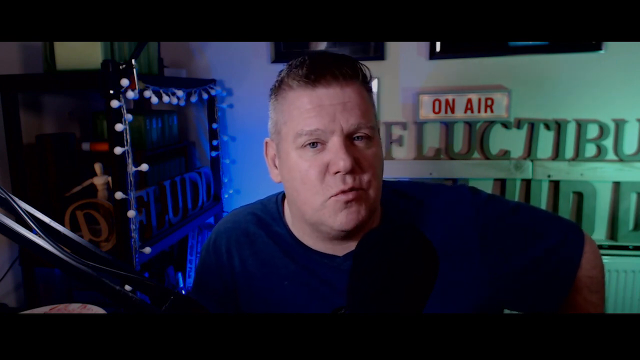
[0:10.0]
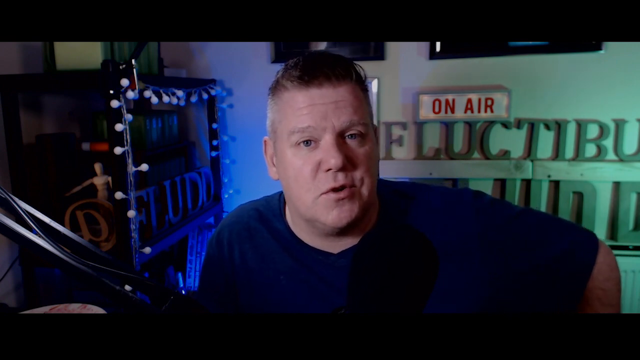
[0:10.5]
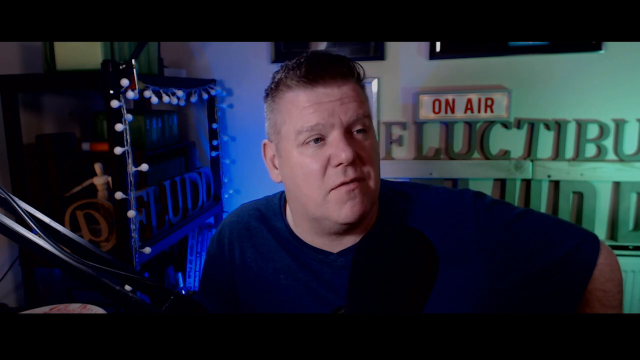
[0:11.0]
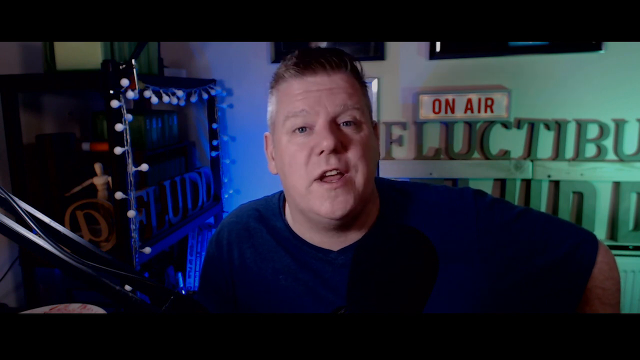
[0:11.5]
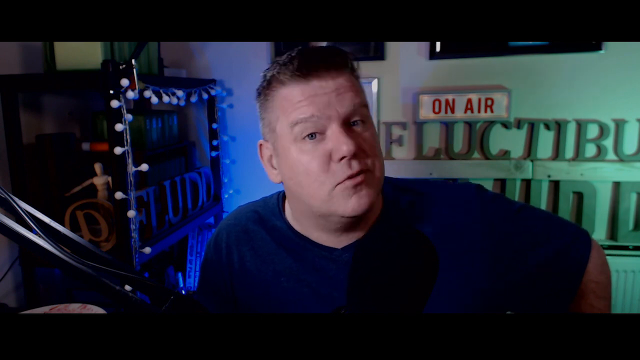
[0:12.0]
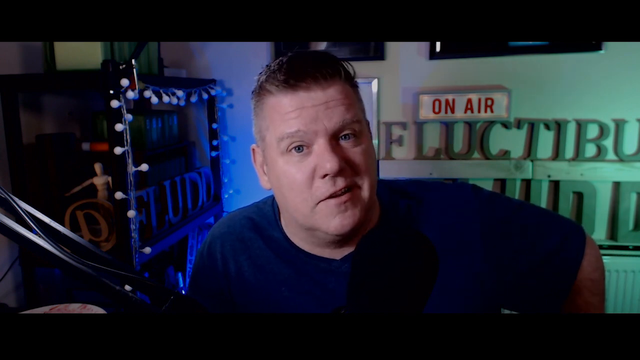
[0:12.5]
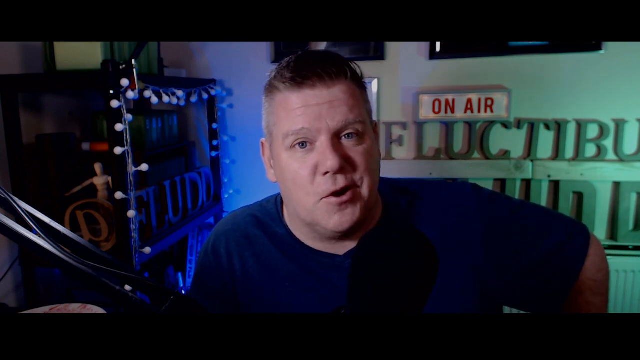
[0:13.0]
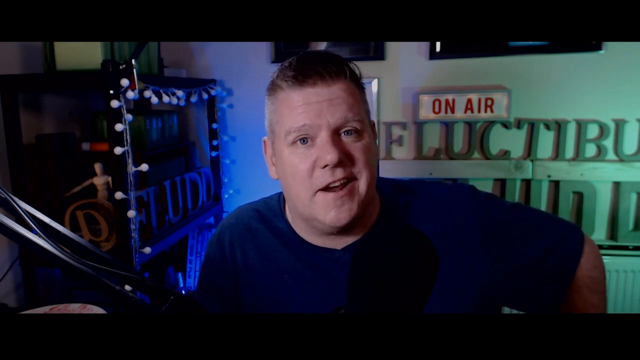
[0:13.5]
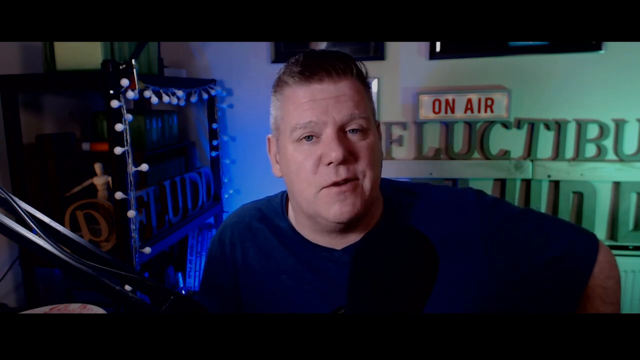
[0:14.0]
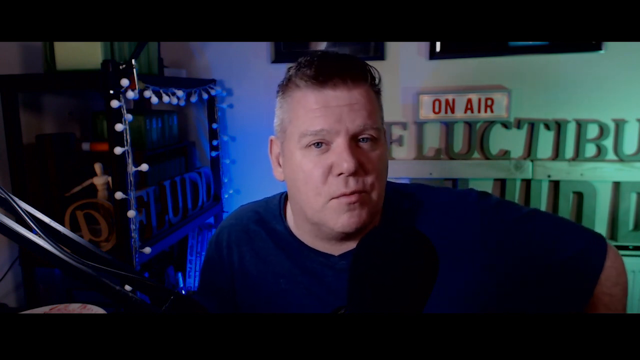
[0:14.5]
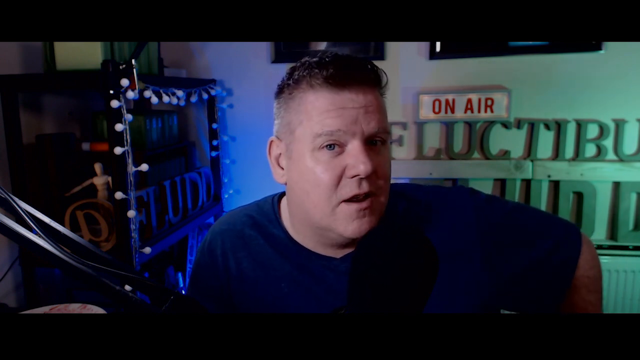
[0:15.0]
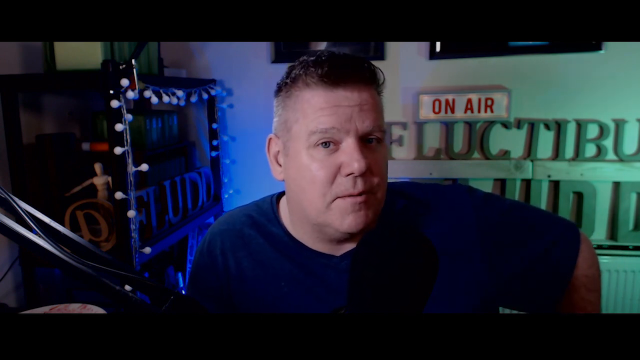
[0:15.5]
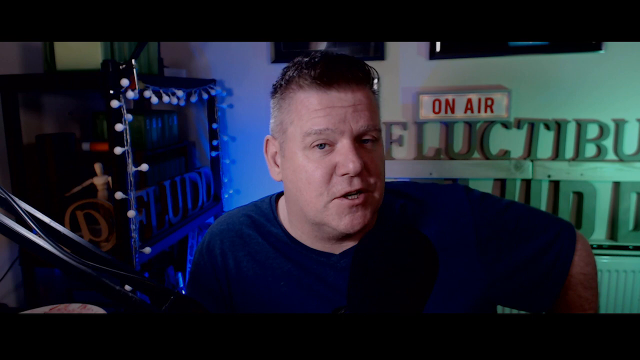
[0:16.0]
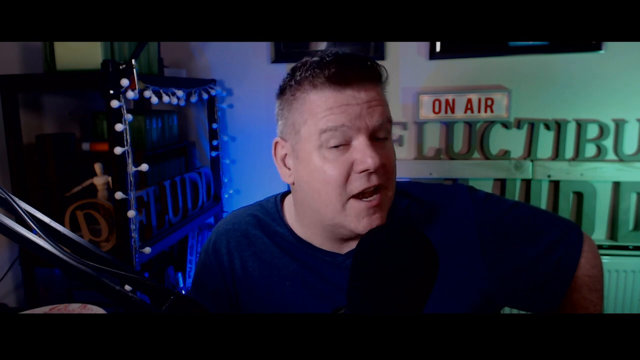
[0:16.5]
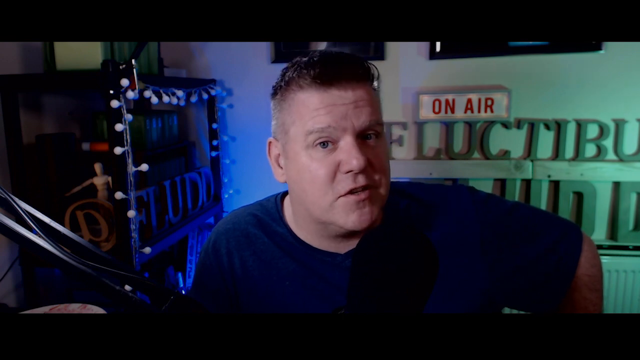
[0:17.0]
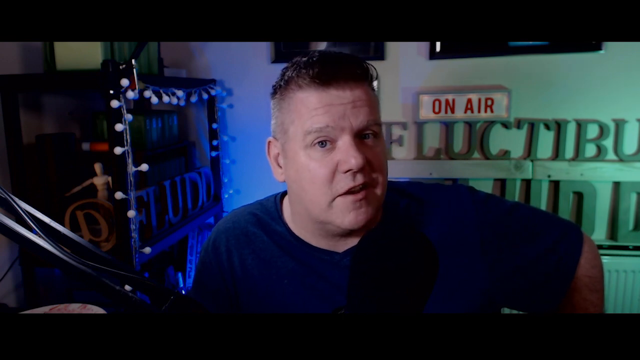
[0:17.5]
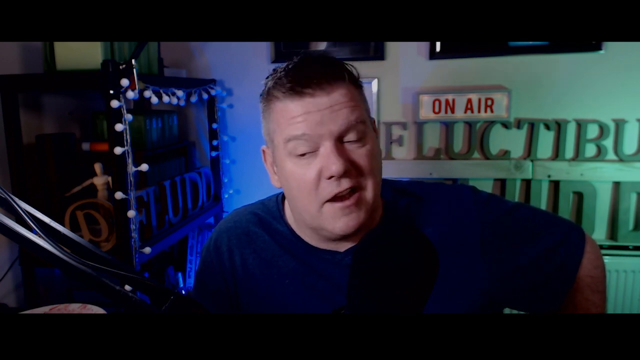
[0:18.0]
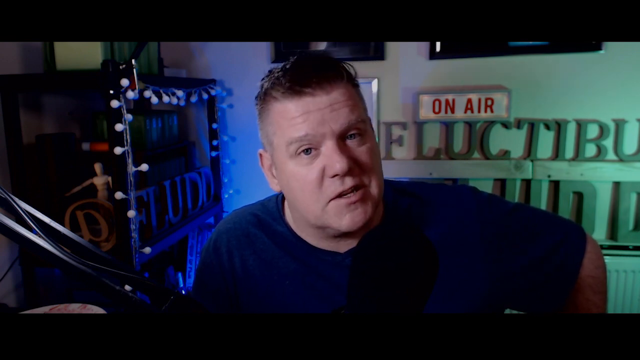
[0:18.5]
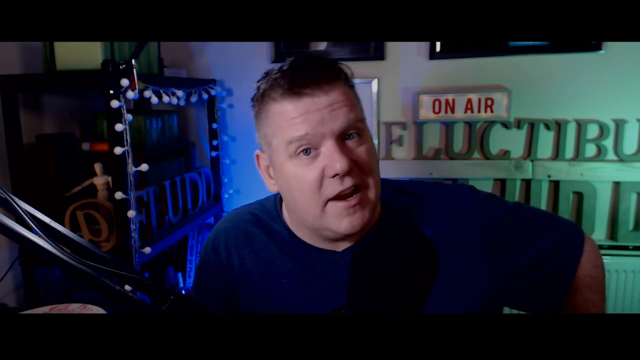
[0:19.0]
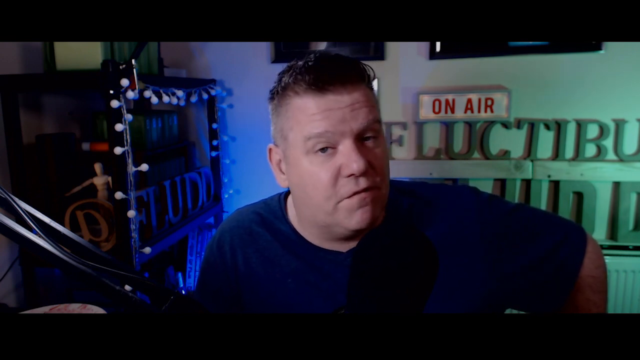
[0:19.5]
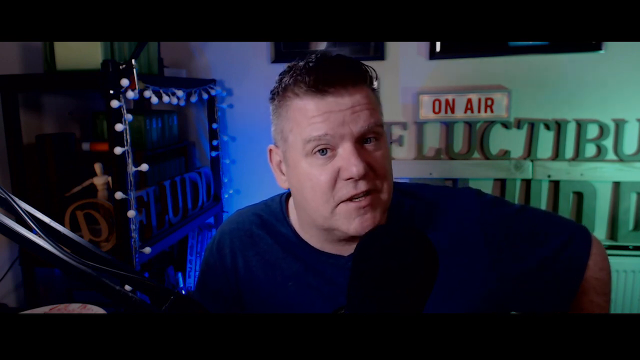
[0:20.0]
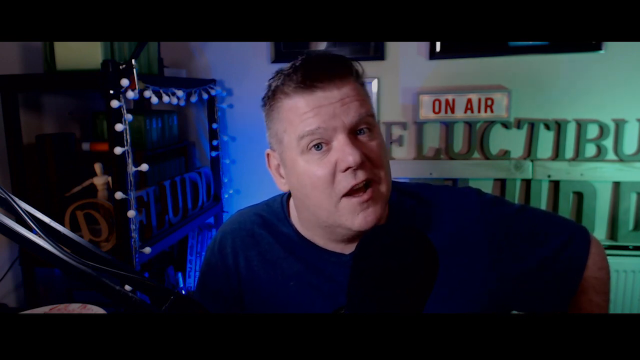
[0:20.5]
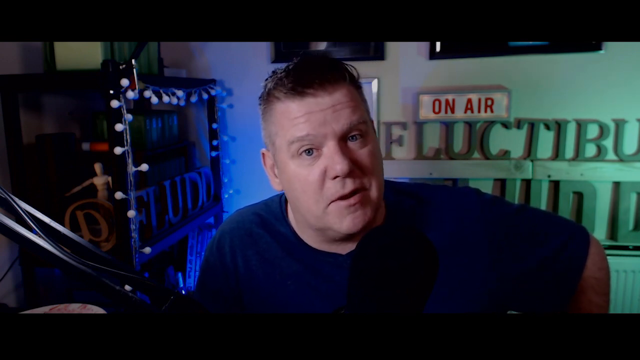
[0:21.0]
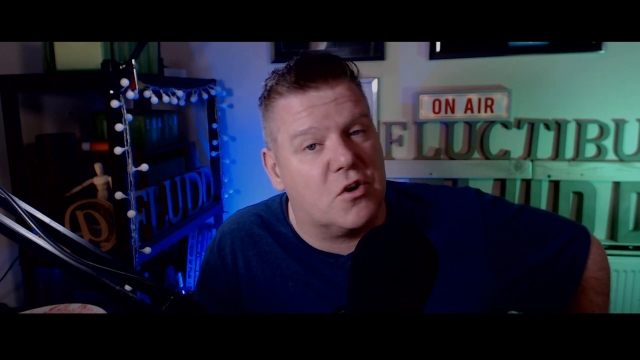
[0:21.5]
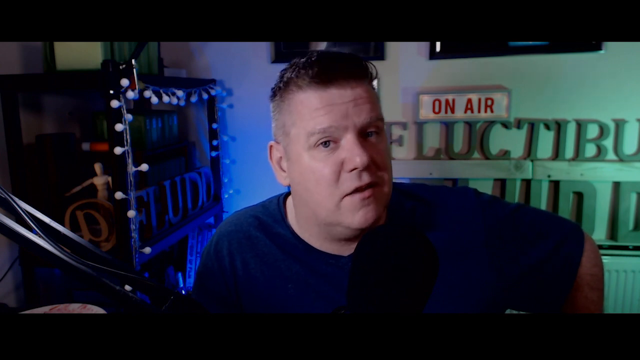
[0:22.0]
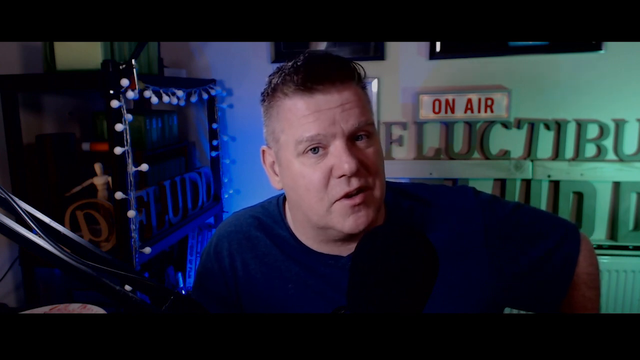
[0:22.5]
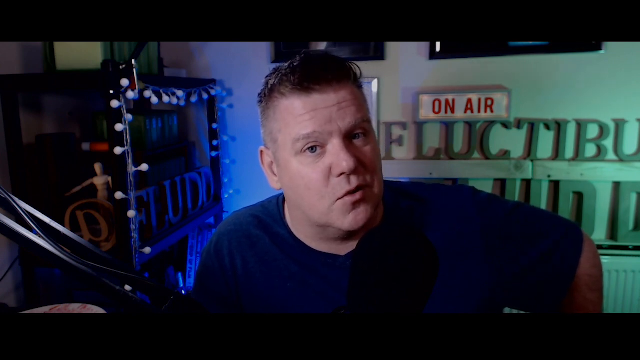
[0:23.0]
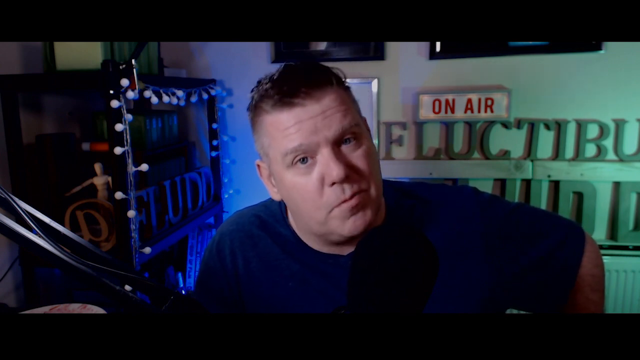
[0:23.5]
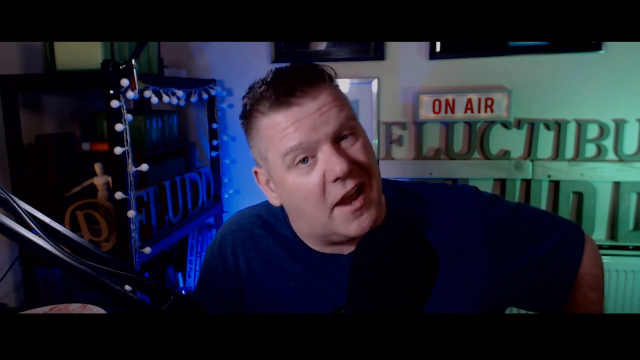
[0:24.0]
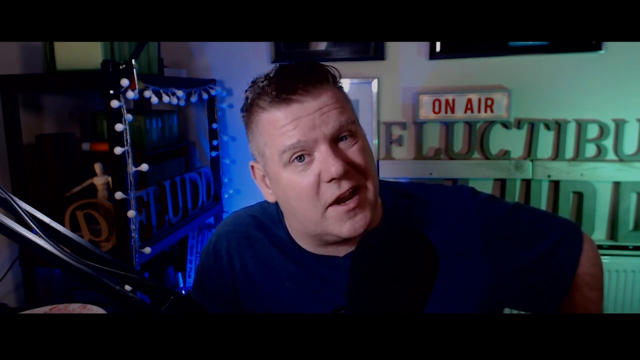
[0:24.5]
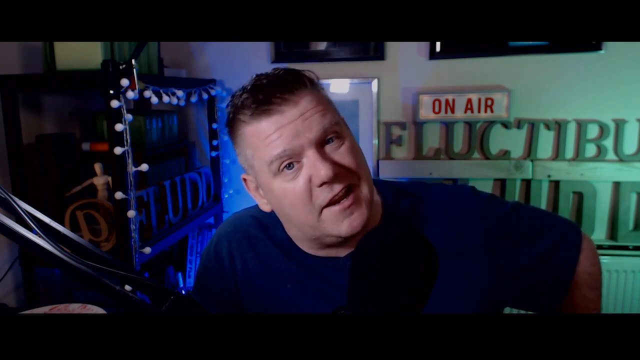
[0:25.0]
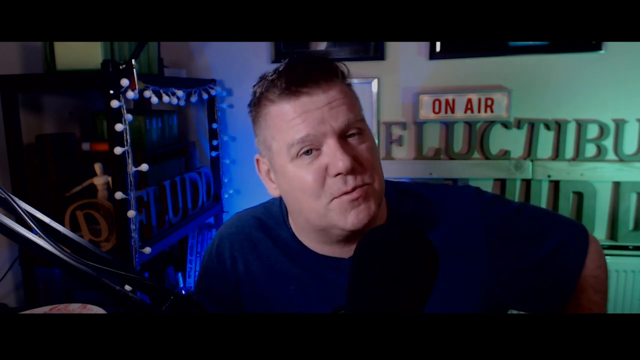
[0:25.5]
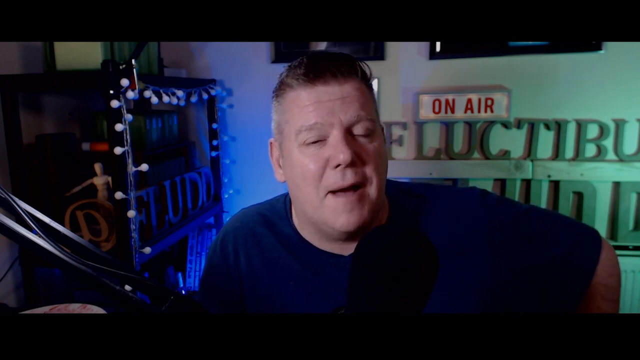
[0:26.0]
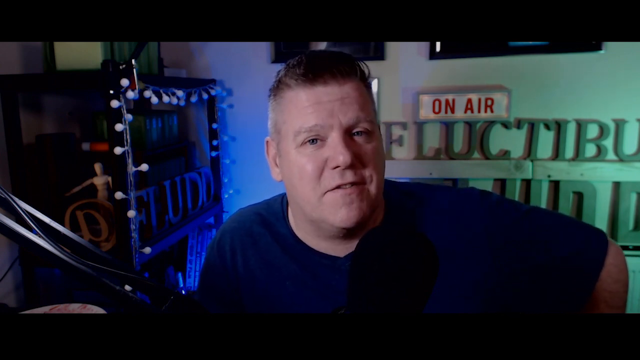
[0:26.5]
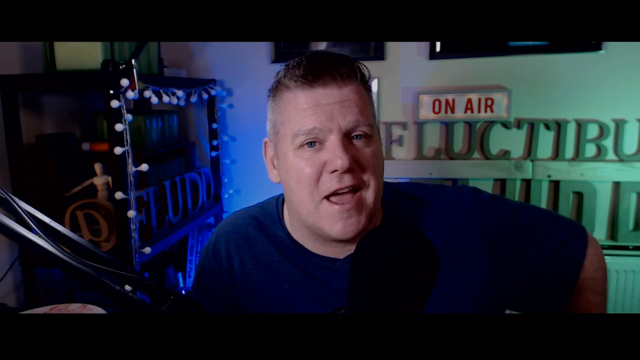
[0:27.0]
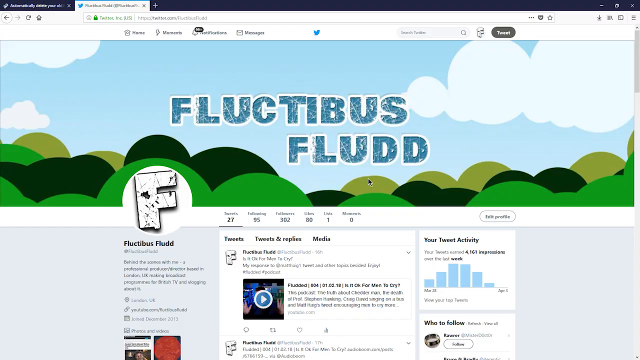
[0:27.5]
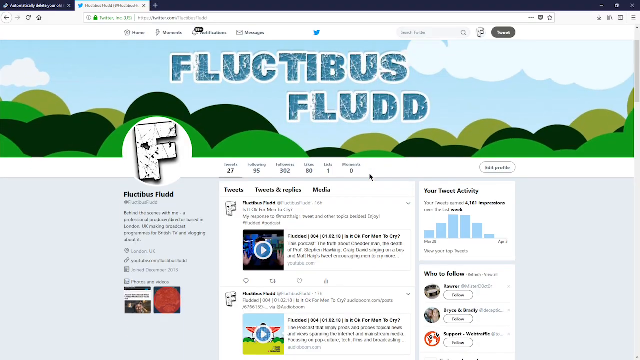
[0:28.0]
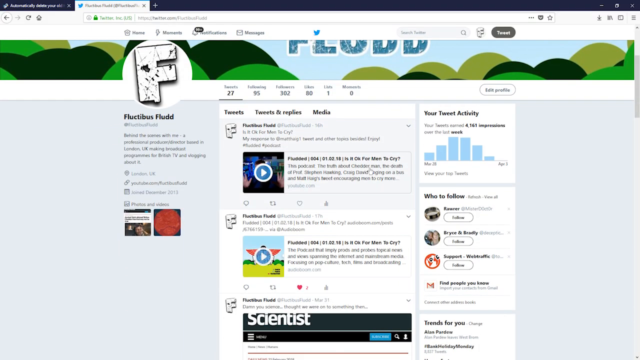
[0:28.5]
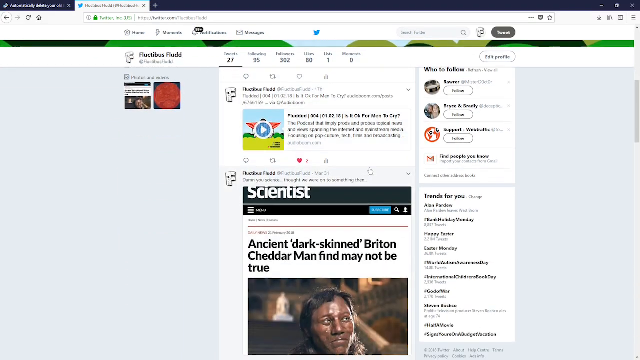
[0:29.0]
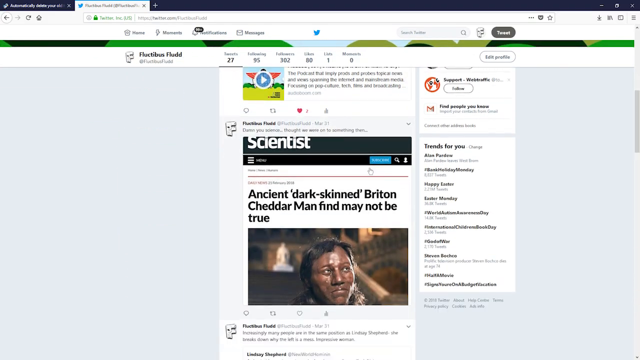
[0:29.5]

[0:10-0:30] A white man in a dark blue short-sleeve shirt, with brown hair that is kind of longer at the top and shaved at the sides, is a little heavyset. He sits in what looks like a home studio. Behind him is a little sign, a white box with "on air" in red font. Shelves are behind him on the left, holding letter blocks that say "@fludd" and a little action figure of a man. On the wall behind him, green letter blocks look like they say "Fluctibus Fludd". The man talks into a black microphone on his desk. Then a Twitter page is open for the account Fluctibus Fludd. The top header image is kind of like a cartoon-looking blue sky with white clouds and round treetops at the bottom, and the user avatar is like a capital letter F that kind of looks a little distressed. The man scrolls down the page to the most recent tweets.